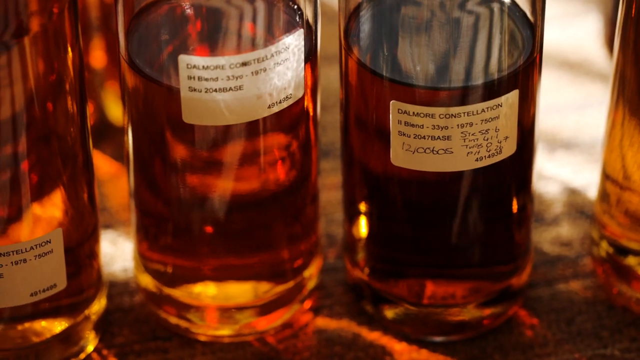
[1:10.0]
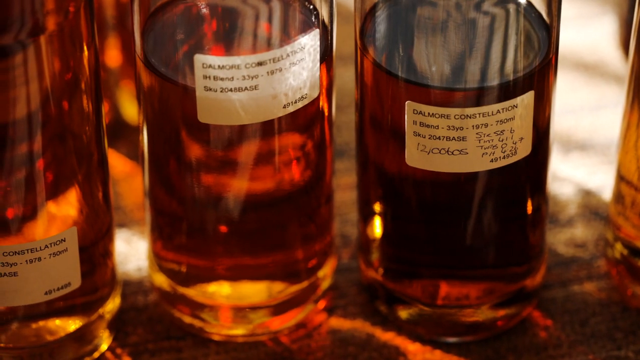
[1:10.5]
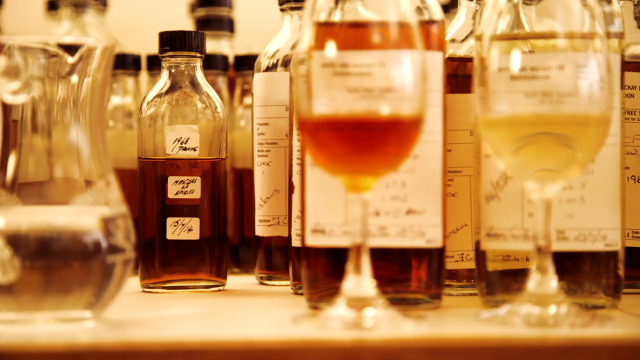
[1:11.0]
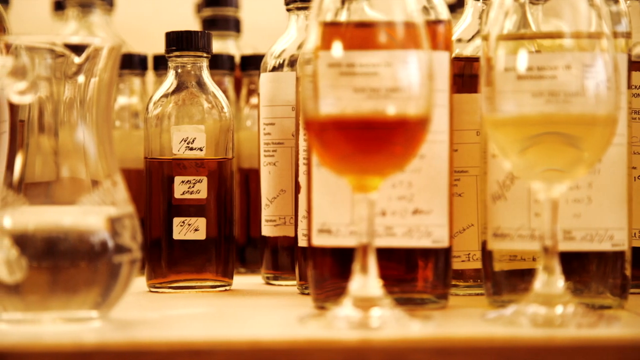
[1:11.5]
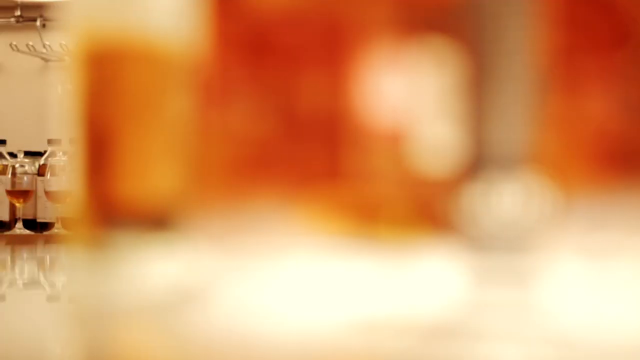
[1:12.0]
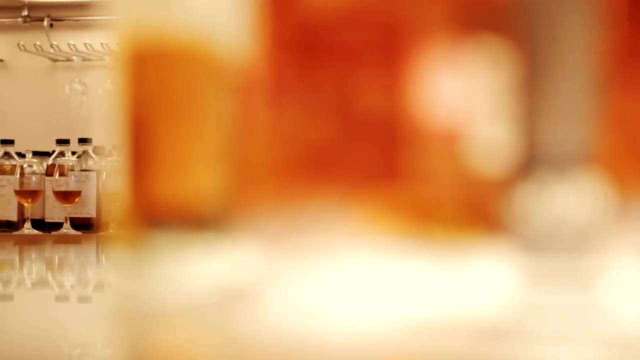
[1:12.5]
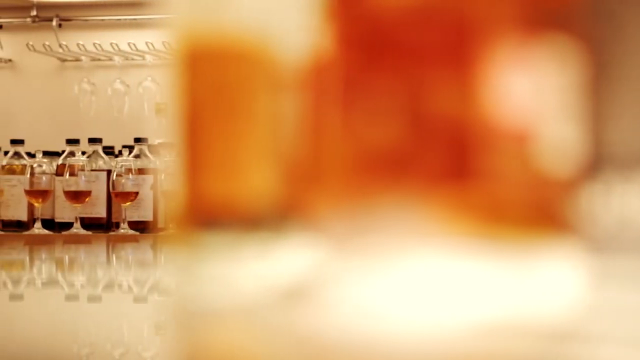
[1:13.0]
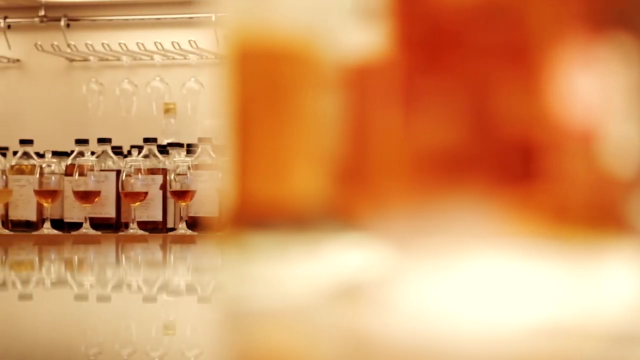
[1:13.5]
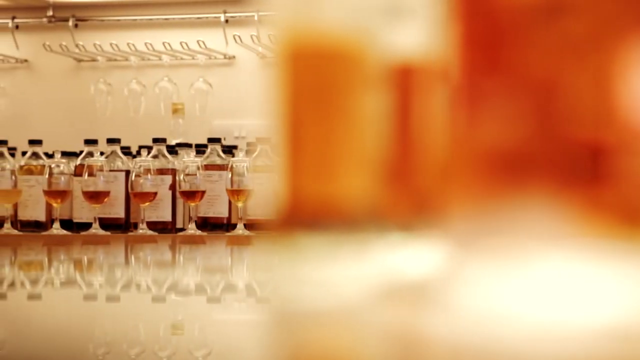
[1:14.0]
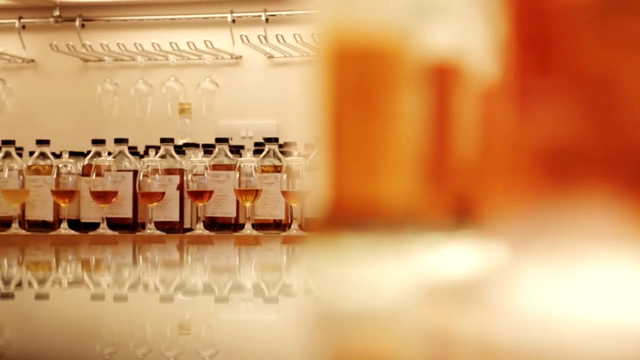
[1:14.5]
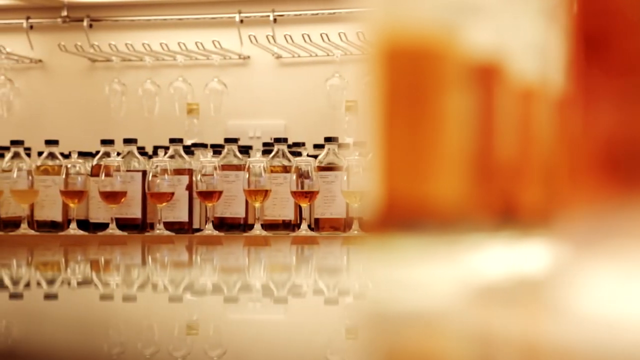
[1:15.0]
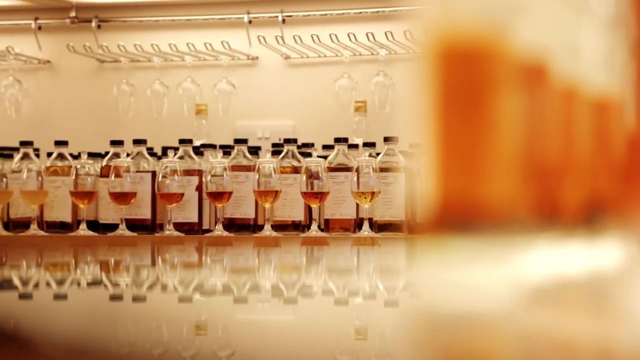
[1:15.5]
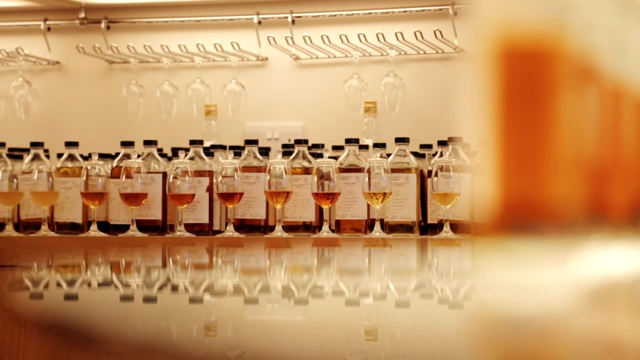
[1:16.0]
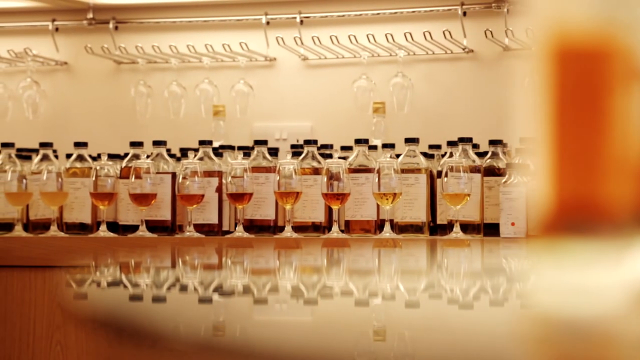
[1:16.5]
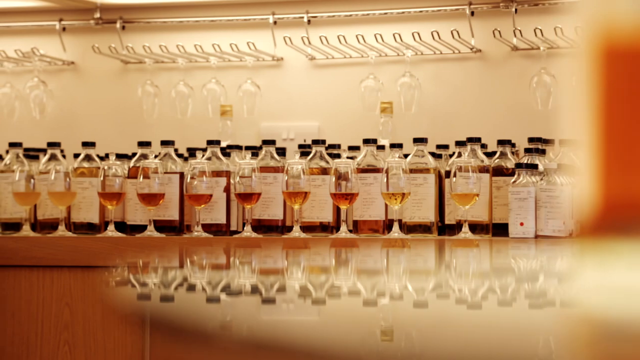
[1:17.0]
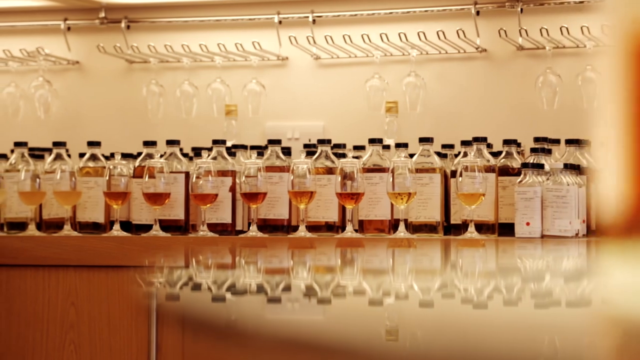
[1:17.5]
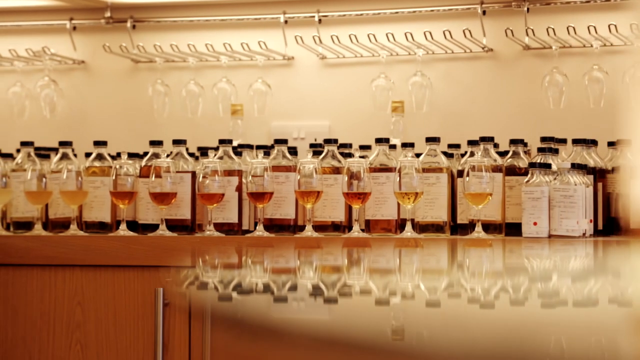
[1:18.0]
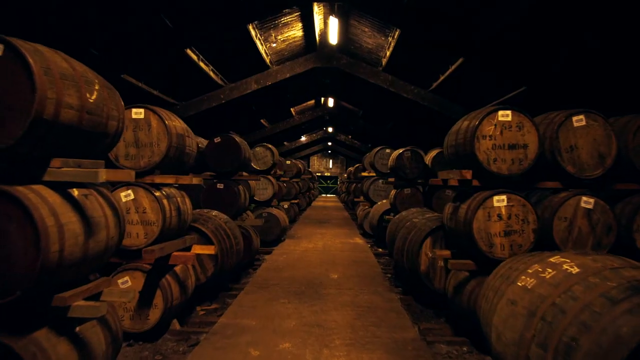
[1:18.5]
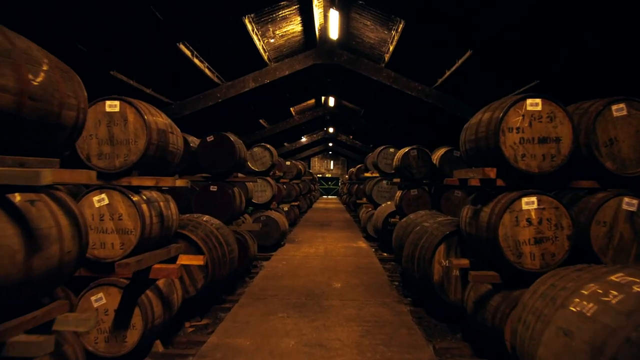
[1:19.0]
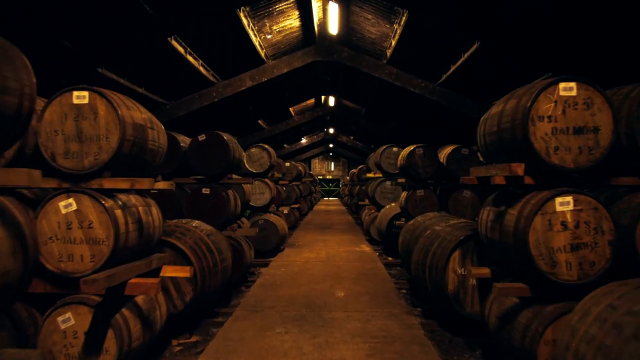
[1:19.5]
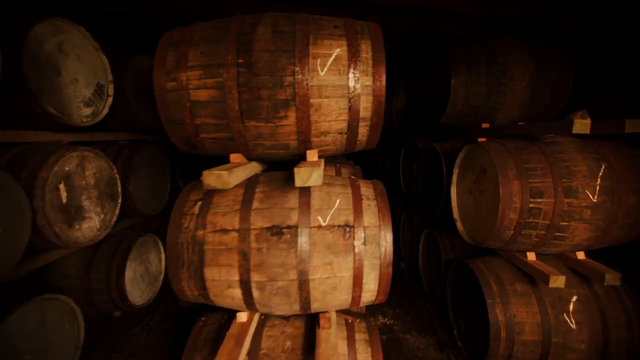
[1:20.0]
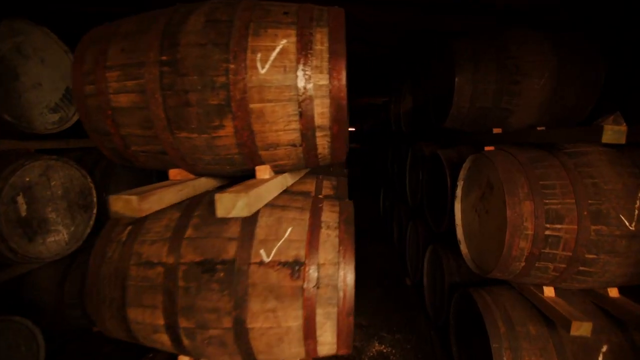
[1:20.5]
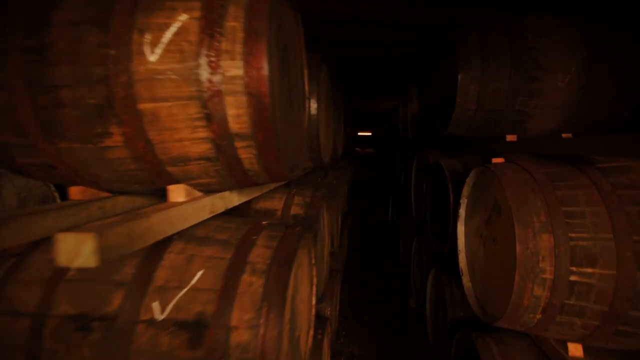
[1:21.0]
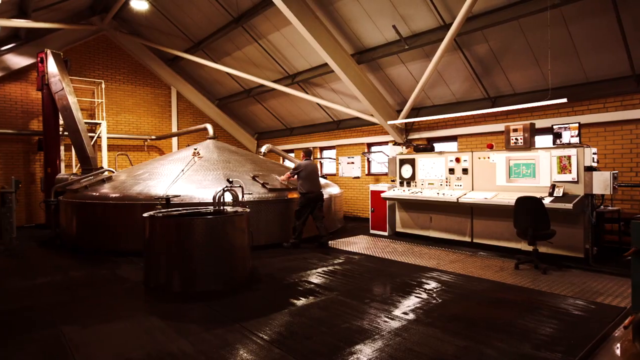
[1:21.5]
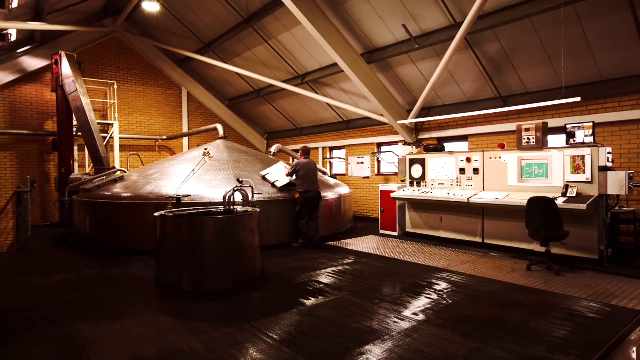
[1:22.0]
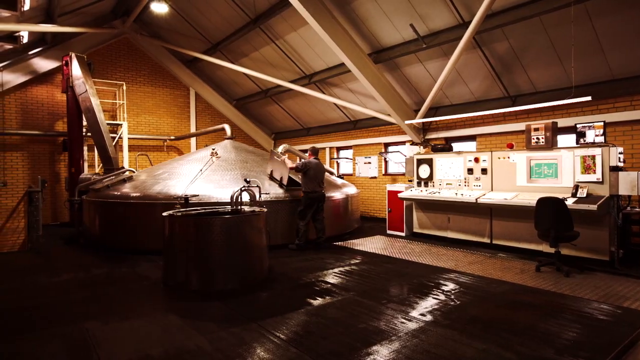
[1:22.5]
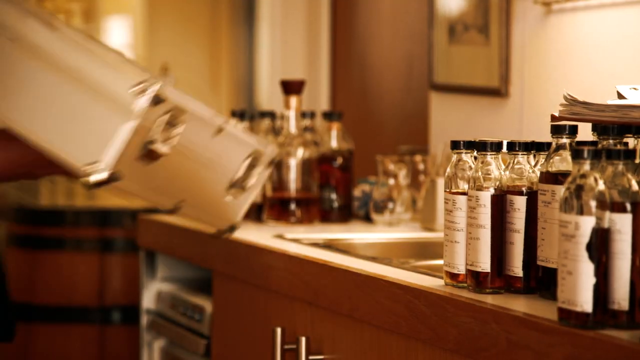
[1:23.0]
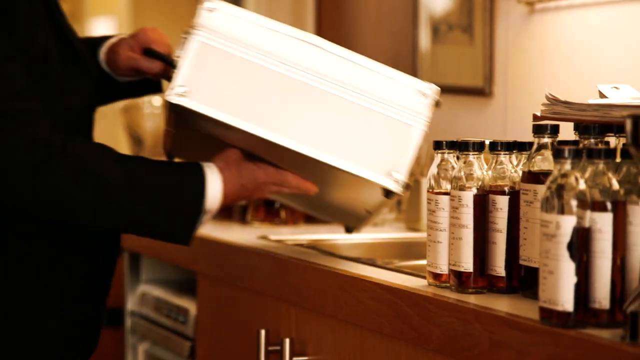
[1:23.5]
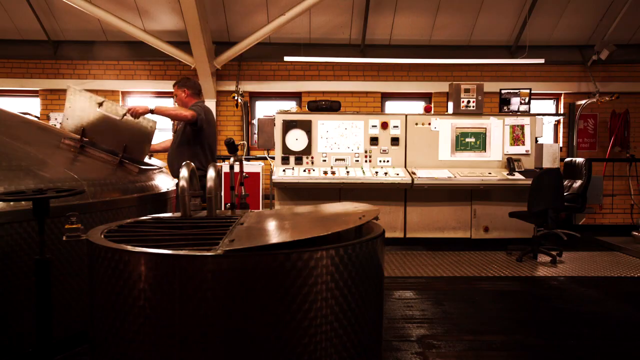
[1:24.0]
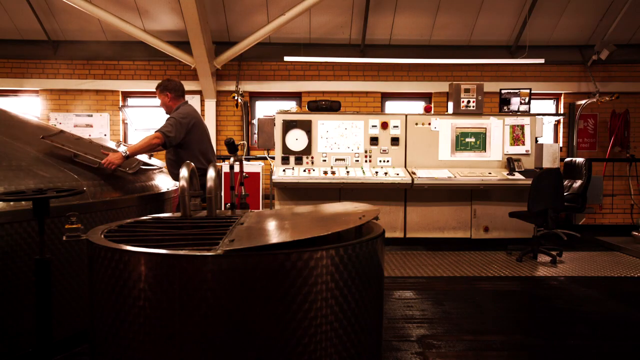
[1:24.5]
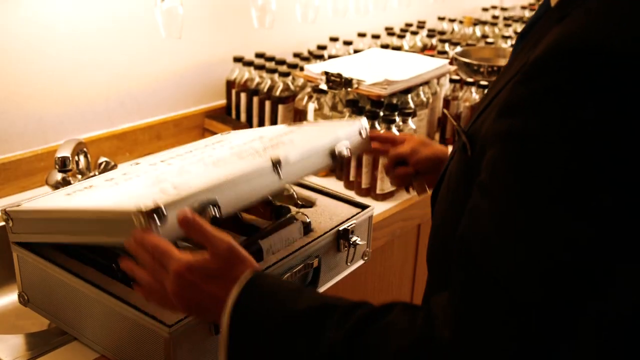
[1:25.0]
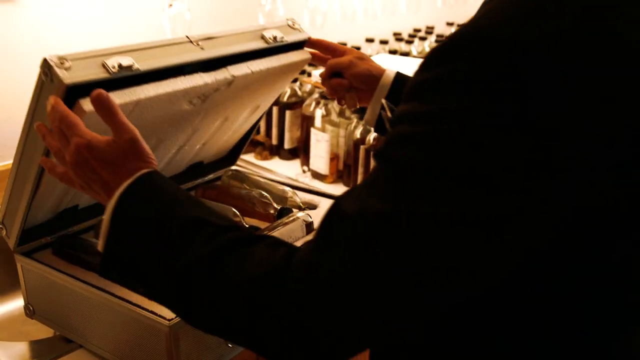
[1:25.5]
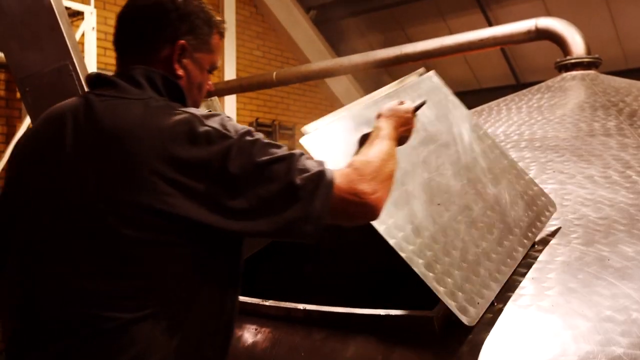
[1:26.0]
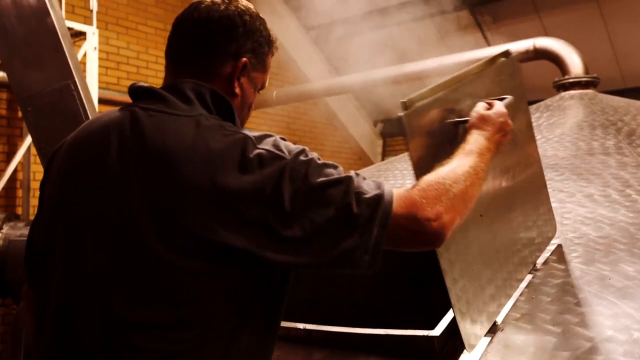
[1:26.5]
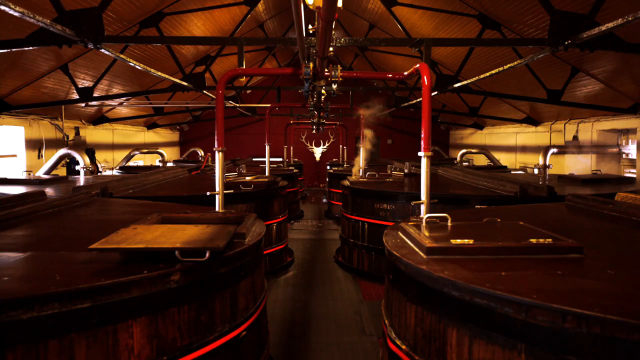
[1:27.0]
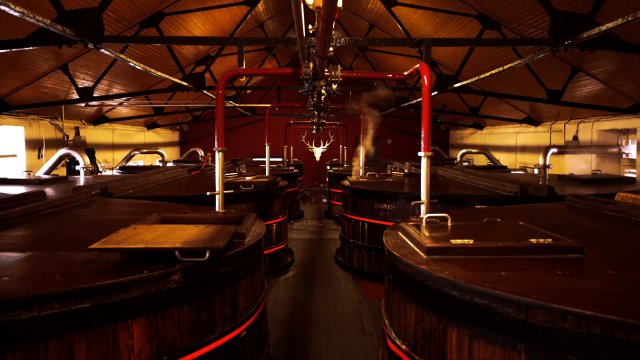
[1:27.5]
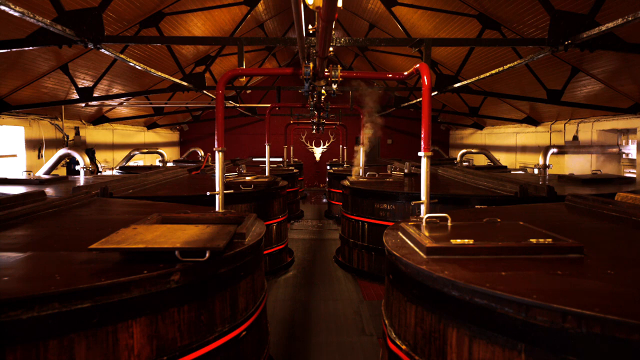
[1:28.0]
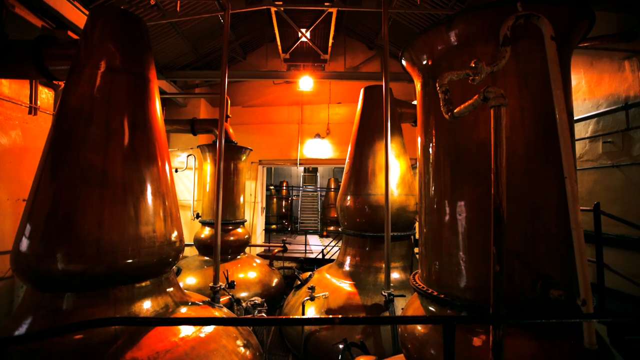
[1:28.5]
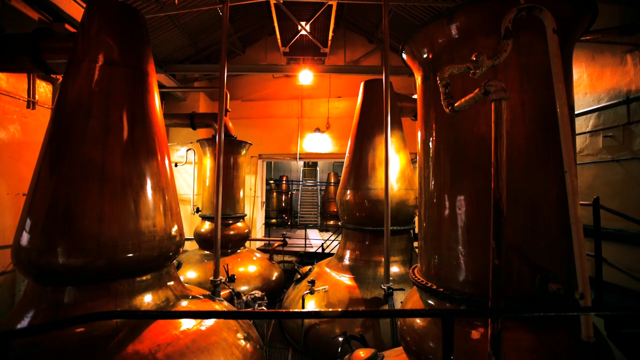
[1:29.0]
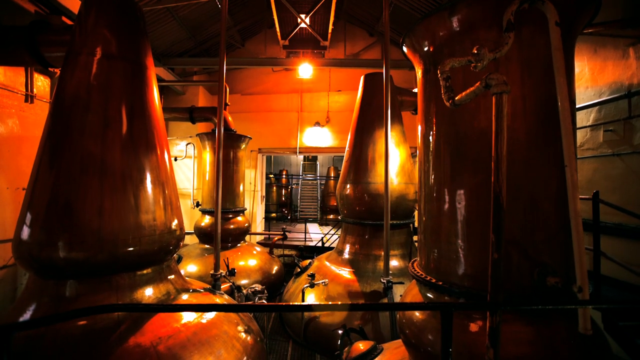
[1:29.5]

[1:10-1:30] Some items have a label stuck on them. The scene moves to a back room where the whiskey is held in whiskey barrels stacked in rows and columns. The master distiller does the taste testing, and some of the glasses hold whiskey of different colors or shades of amber.